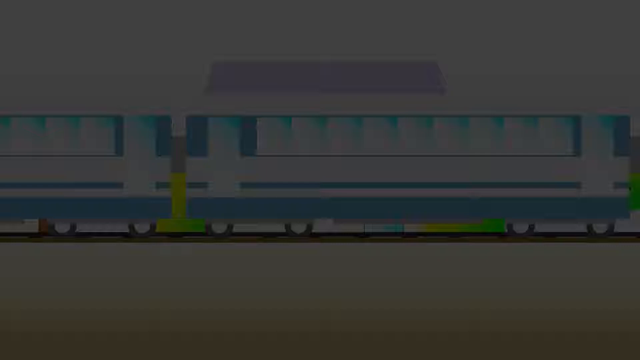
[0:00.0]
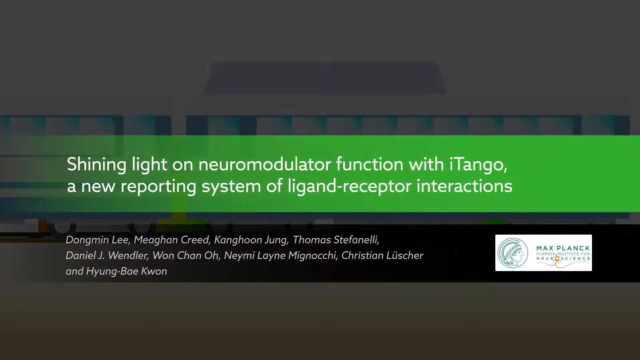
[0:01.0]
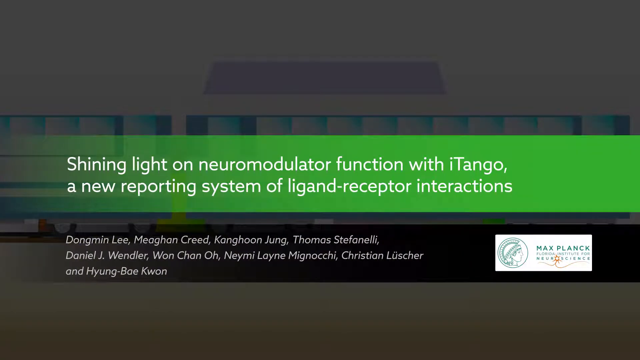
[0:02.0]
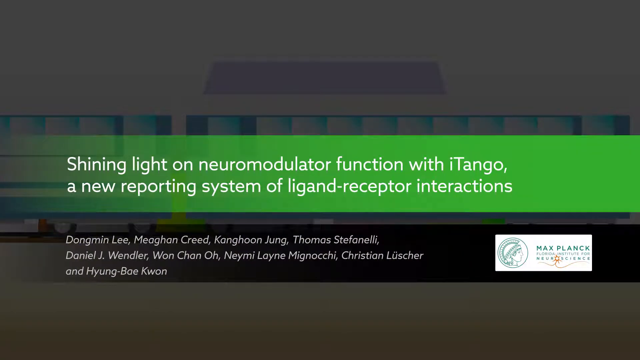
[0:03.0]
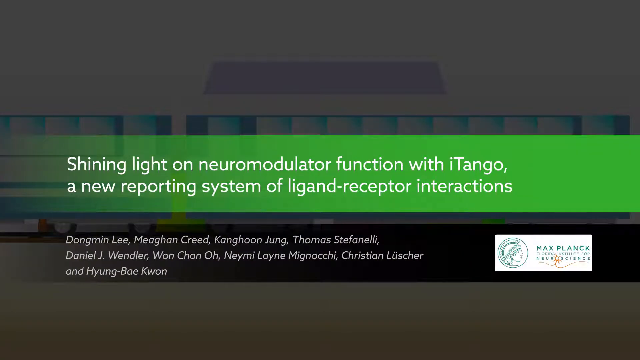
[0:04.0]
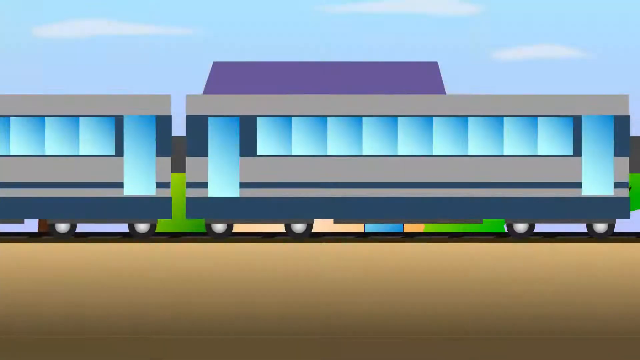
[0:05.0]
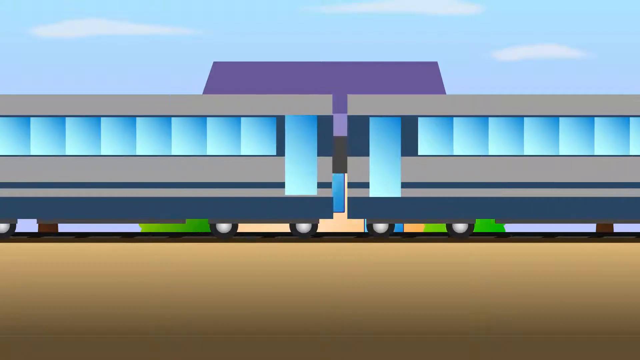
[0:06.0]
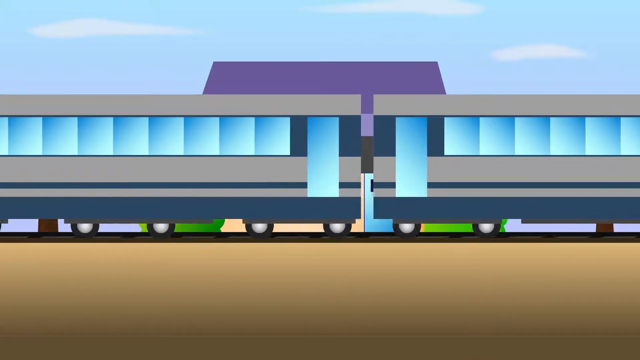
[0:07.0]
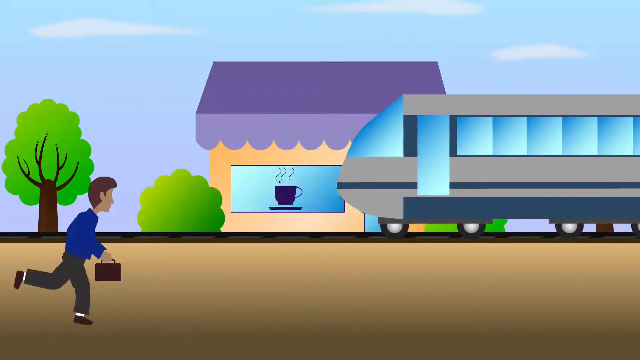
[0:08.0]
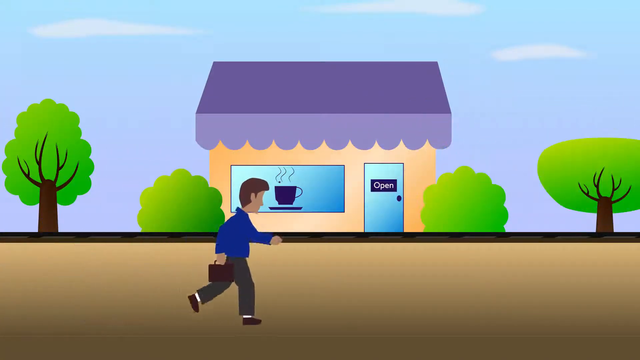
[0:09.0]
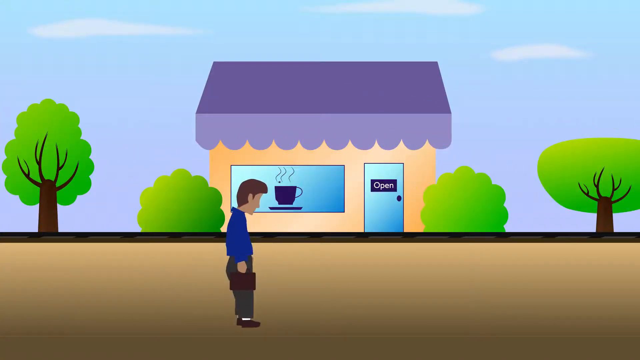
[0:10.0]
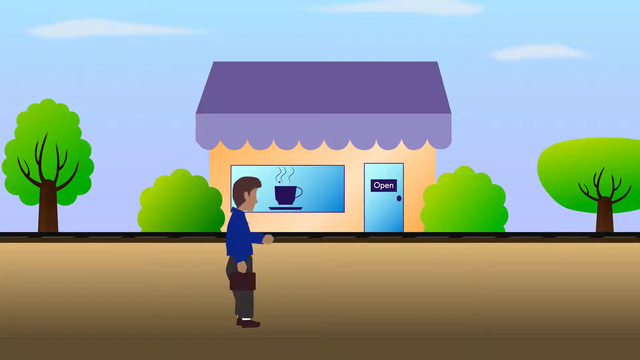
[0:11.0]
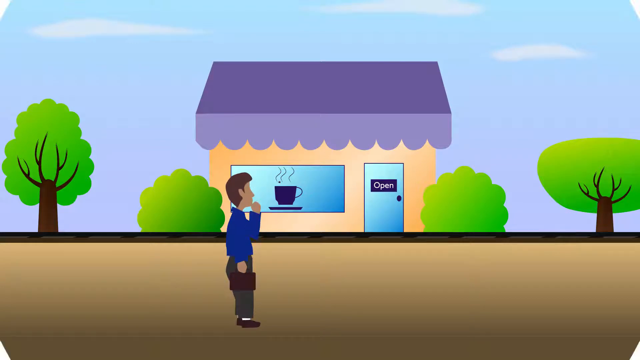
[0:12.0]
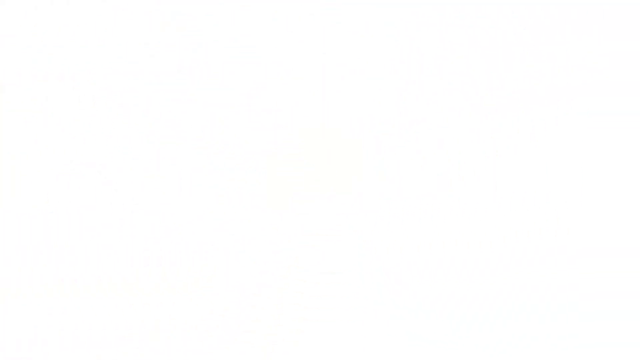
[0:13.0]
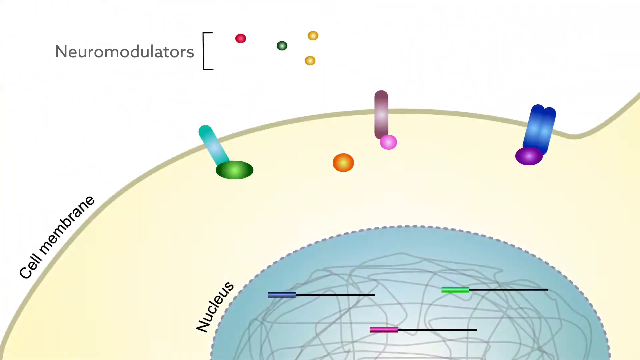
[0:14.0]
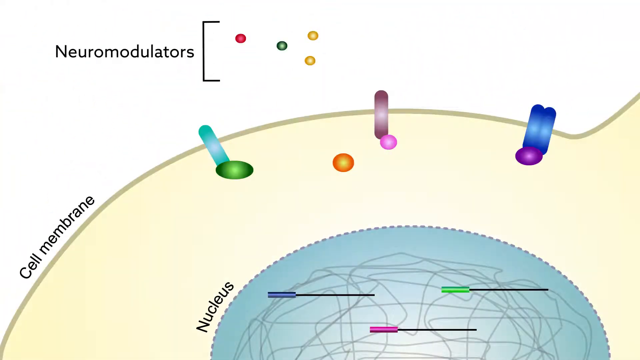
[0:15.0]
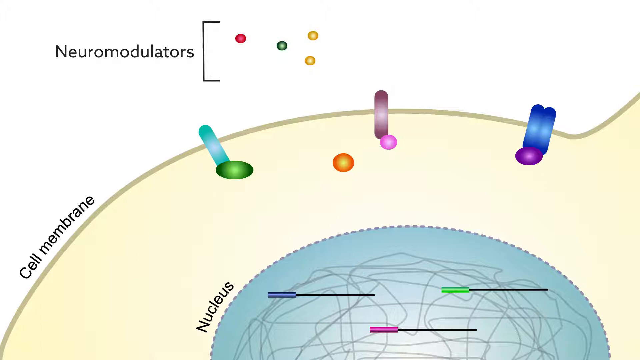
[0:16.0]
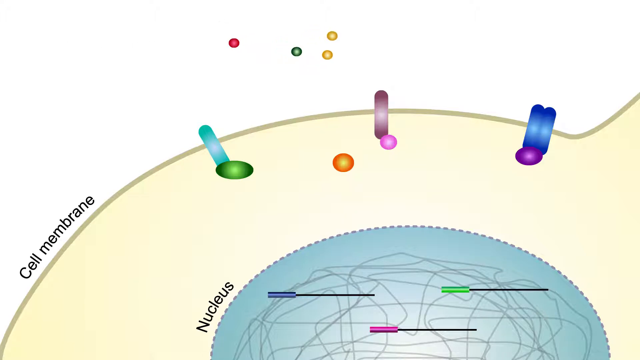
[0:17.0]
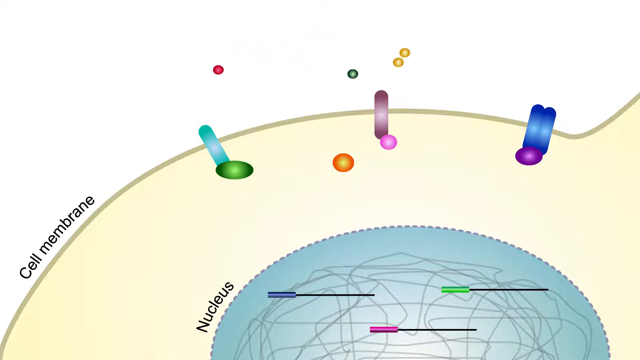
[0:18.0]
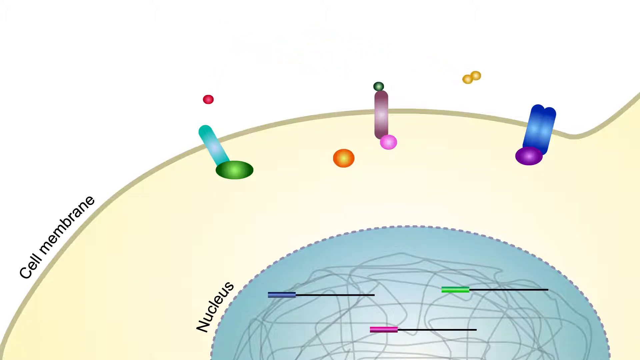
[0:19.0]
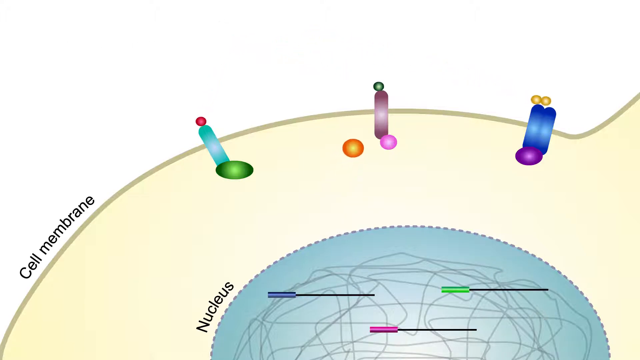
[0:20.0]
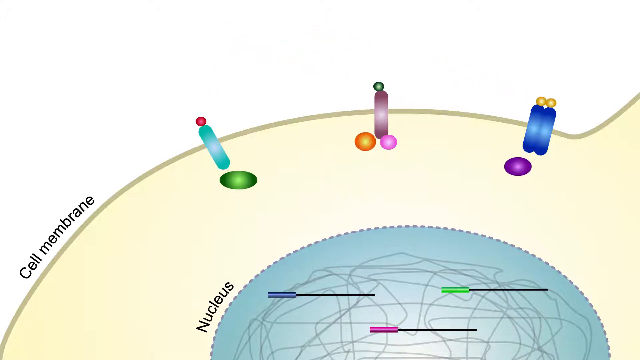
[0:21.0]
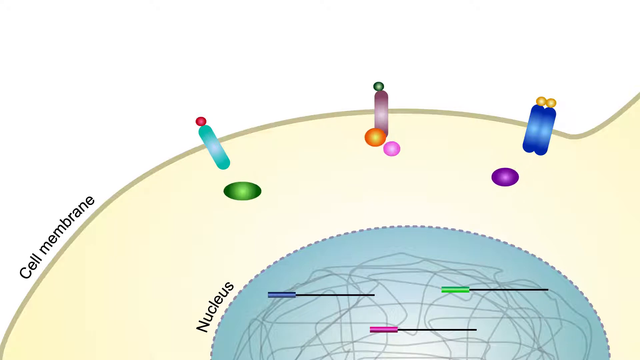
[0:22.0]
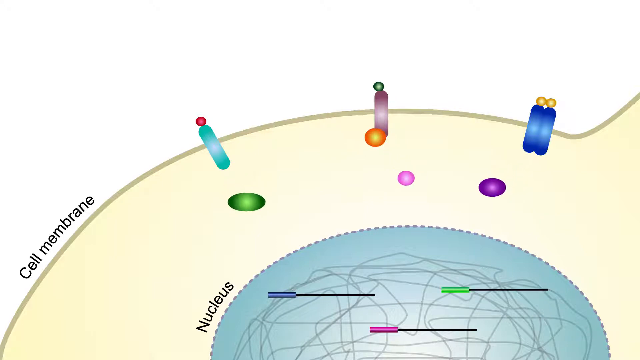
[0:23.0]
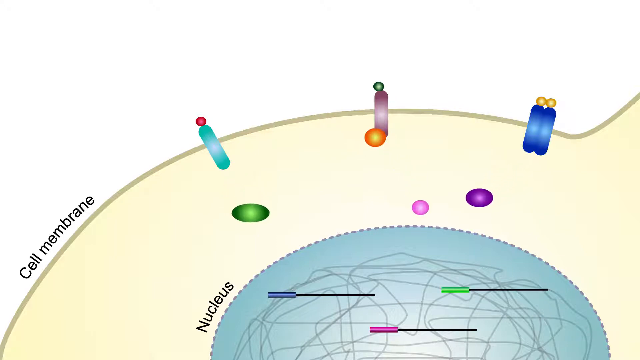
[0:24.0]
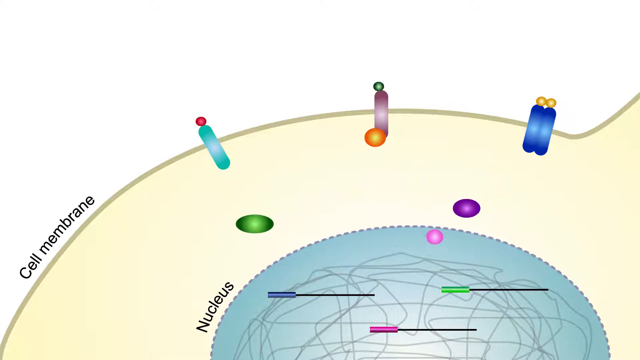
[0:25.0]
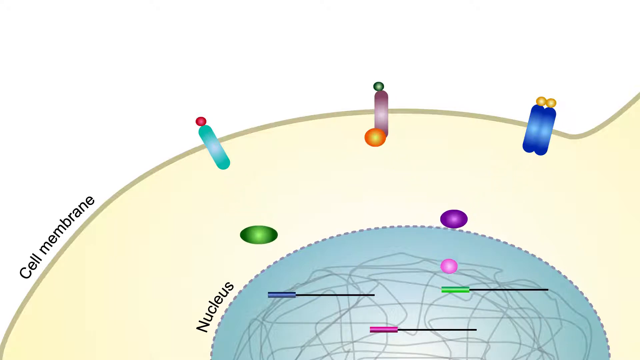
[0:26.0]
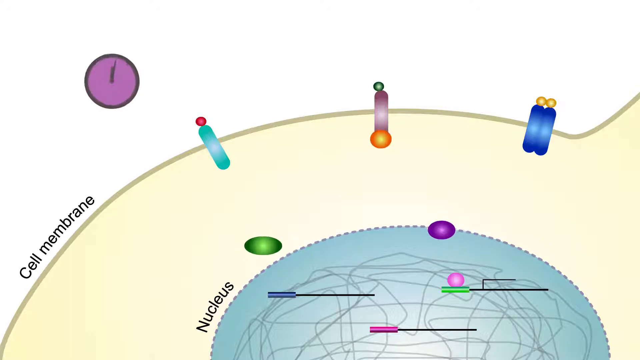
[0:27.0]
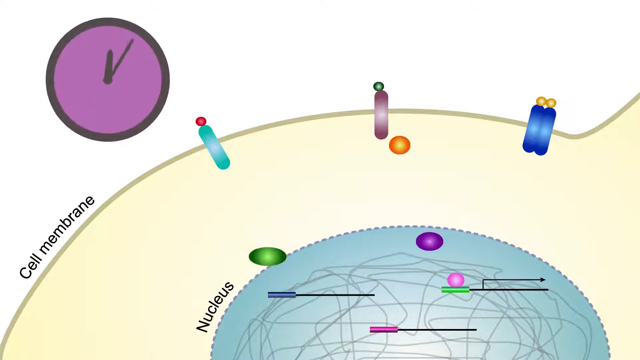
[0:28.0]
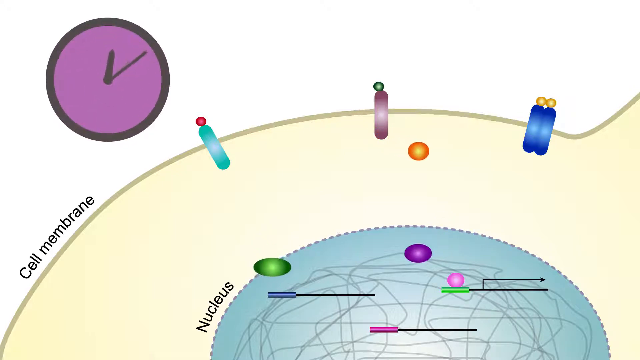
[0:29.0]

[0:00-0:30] Text slides in from the left and right, apparently serving as the title or opening of the video. From the left comes a green bar with white text reading "shining light on neuromodulator function with iTango, a new reporting system of ligand receptor interactions." At the bottom, a black bar comes in from the right, listing the people involved in the video, such as Megan Creed and Nami Lane Makenochi. Next, an animation shows a train going by to the right, and a man in a black vest runs after it, coming in from the left and seemingly thinking. The video then moves into a scientific diagram of neuromodulators.